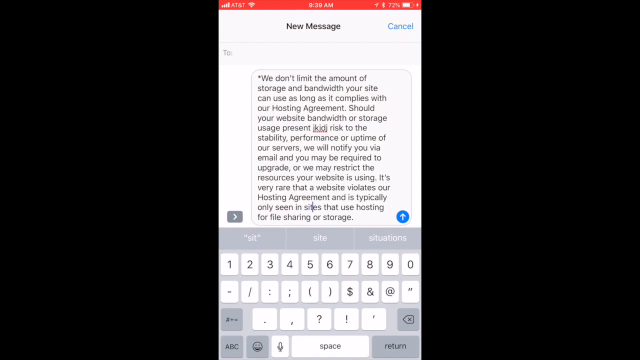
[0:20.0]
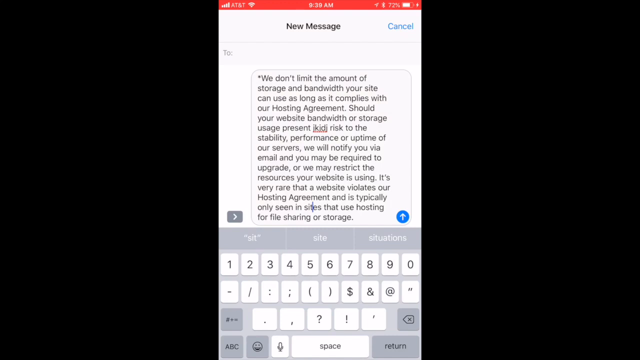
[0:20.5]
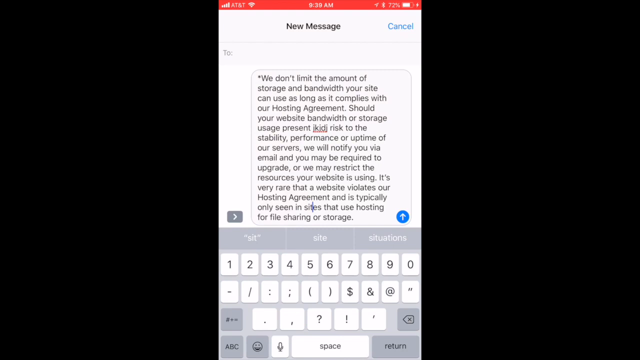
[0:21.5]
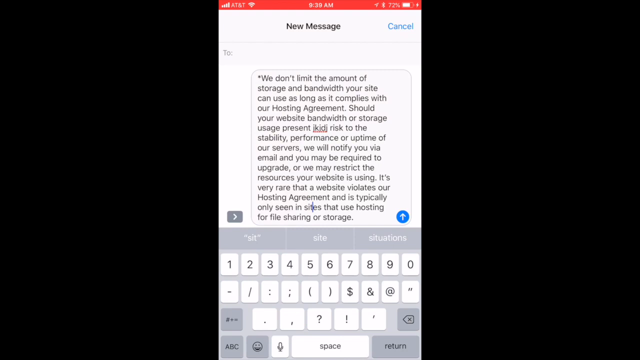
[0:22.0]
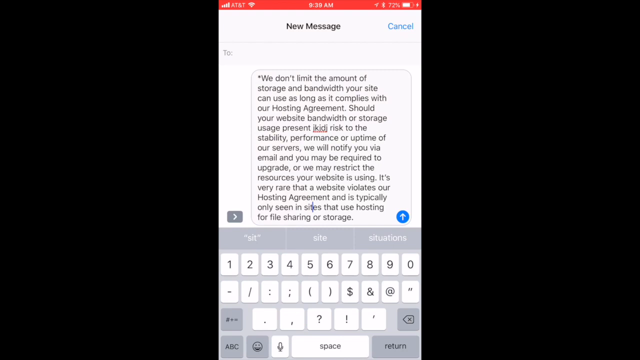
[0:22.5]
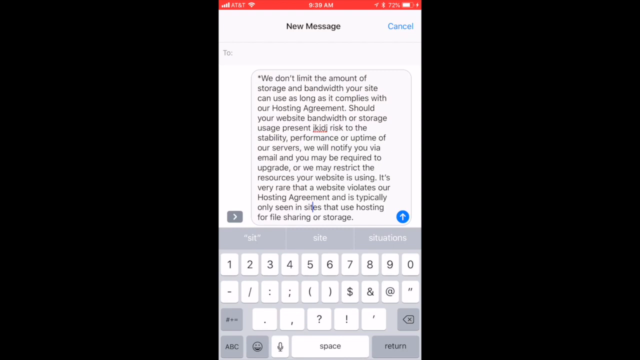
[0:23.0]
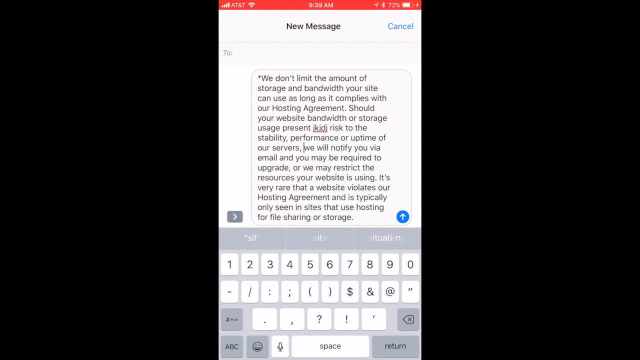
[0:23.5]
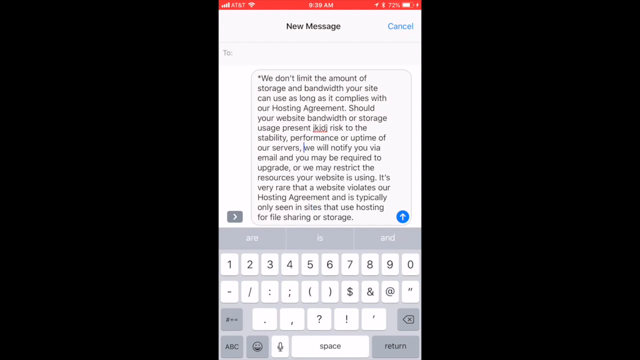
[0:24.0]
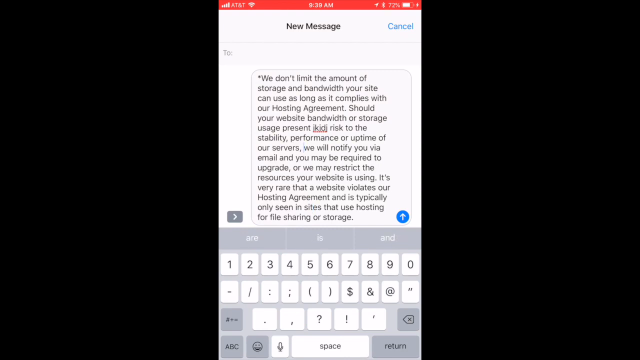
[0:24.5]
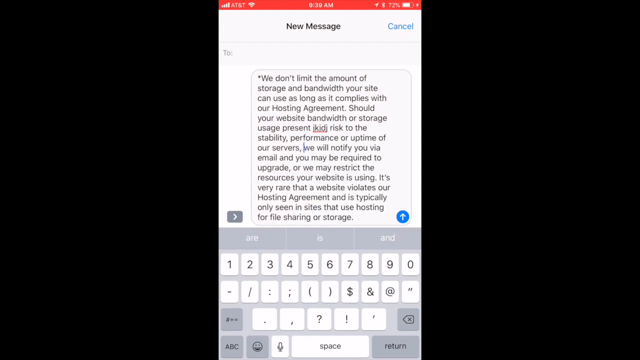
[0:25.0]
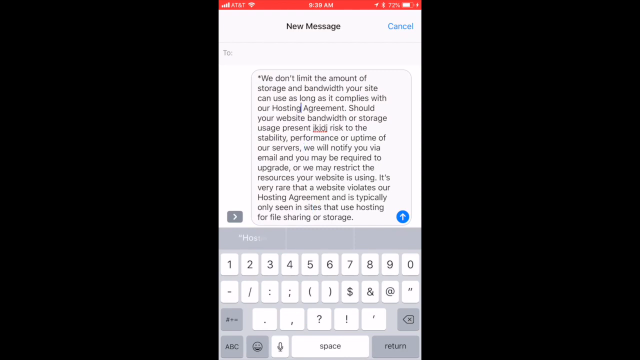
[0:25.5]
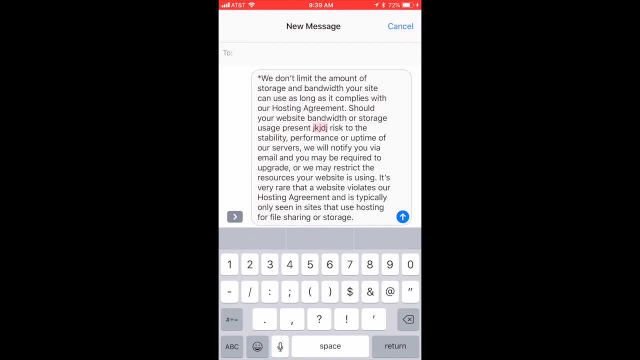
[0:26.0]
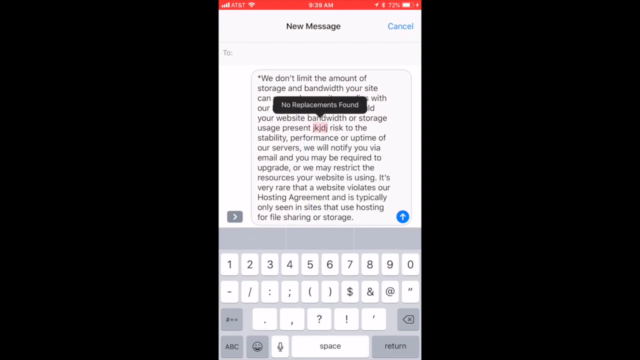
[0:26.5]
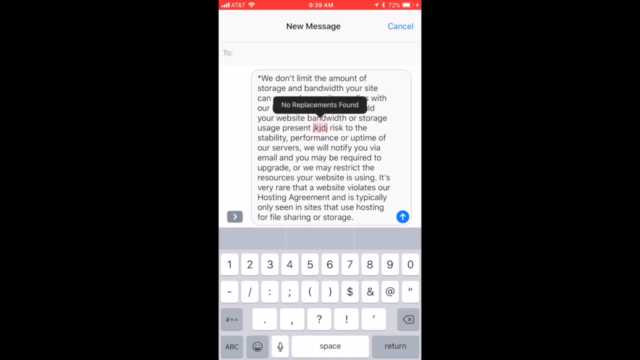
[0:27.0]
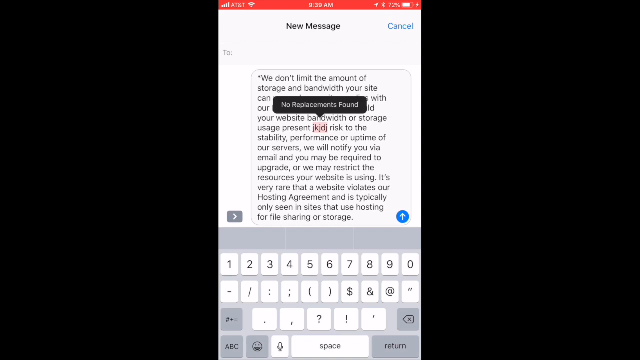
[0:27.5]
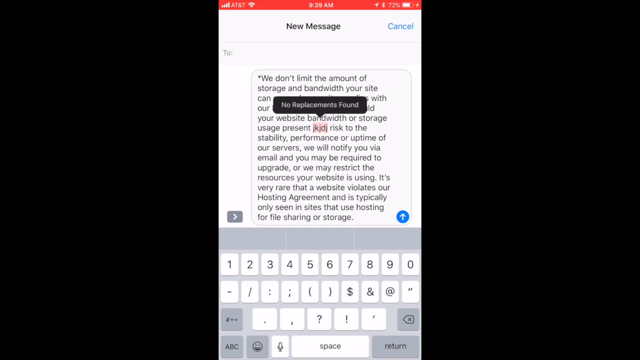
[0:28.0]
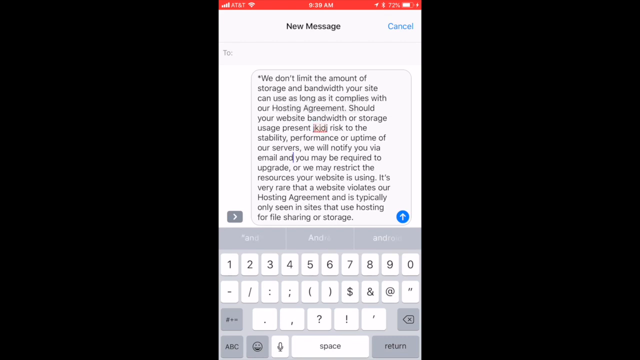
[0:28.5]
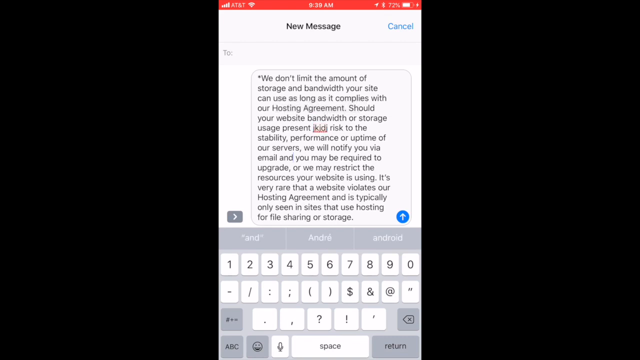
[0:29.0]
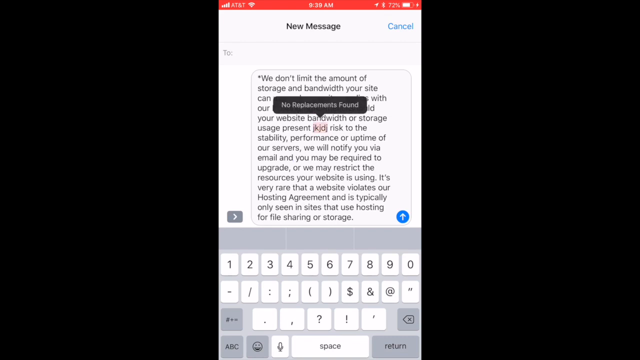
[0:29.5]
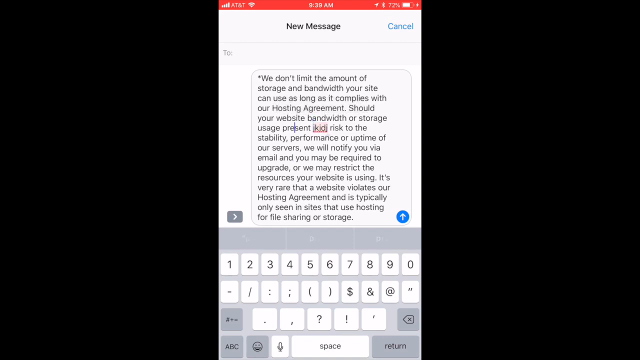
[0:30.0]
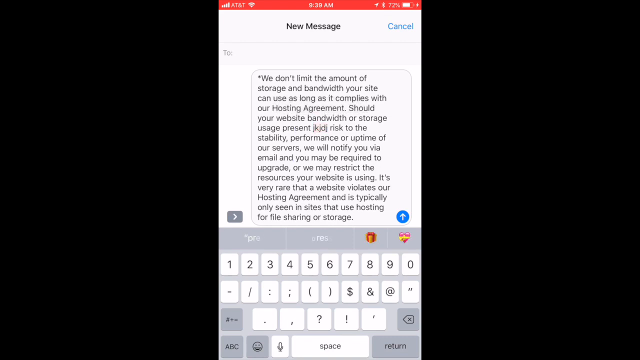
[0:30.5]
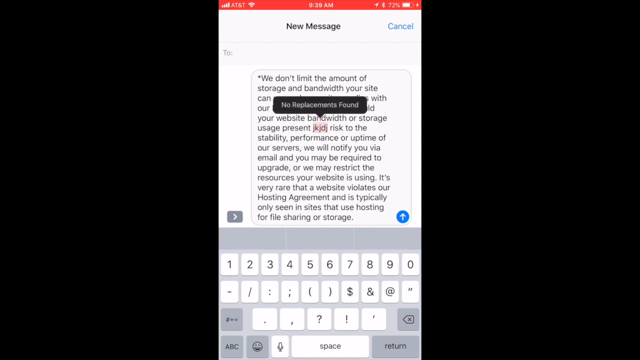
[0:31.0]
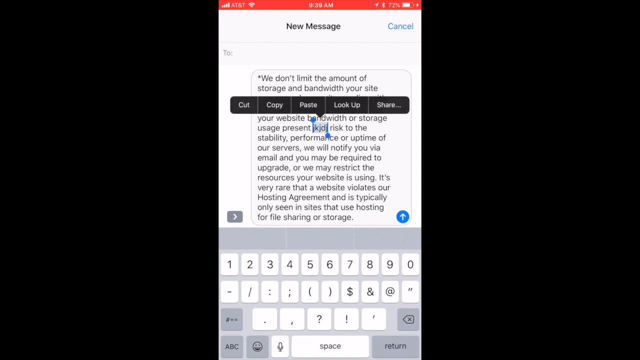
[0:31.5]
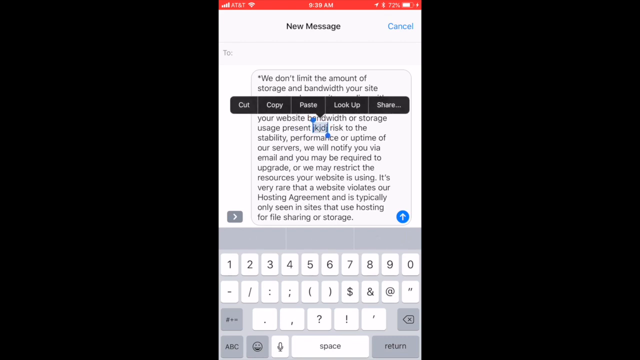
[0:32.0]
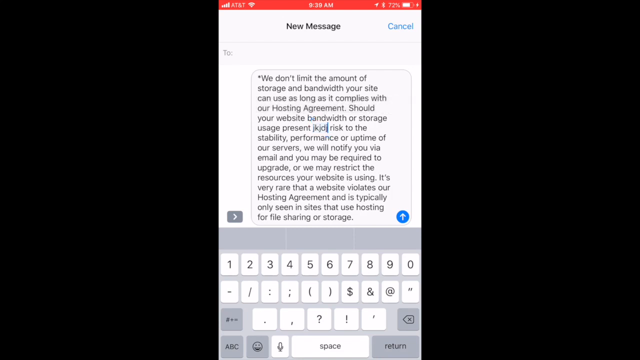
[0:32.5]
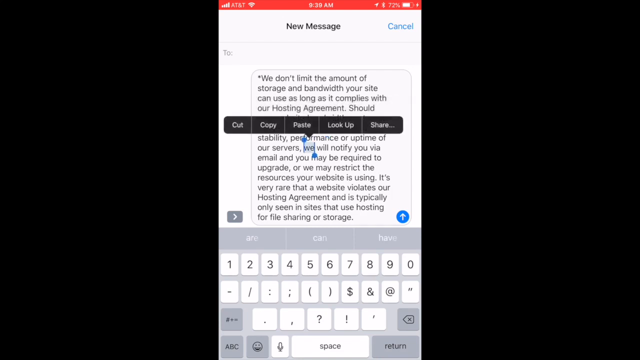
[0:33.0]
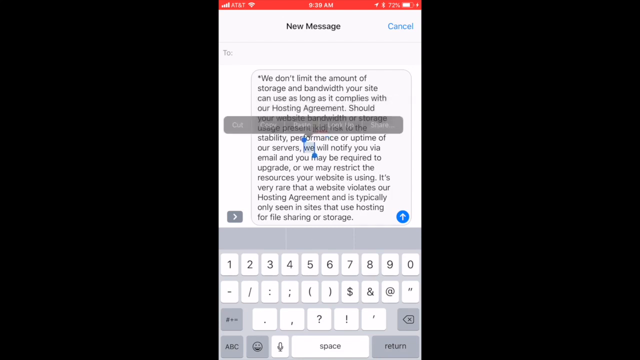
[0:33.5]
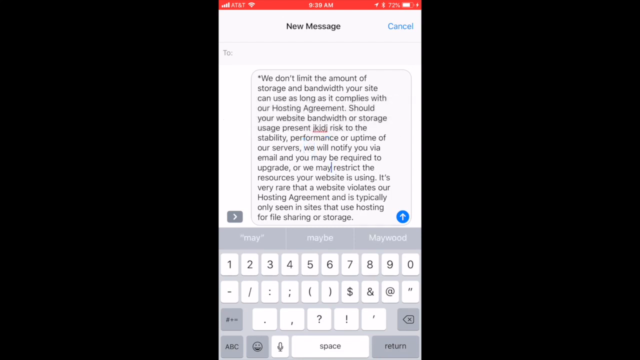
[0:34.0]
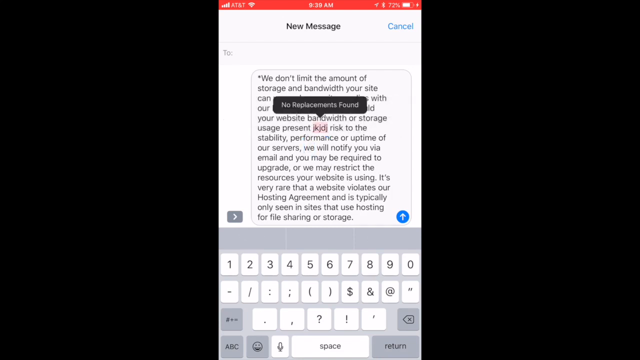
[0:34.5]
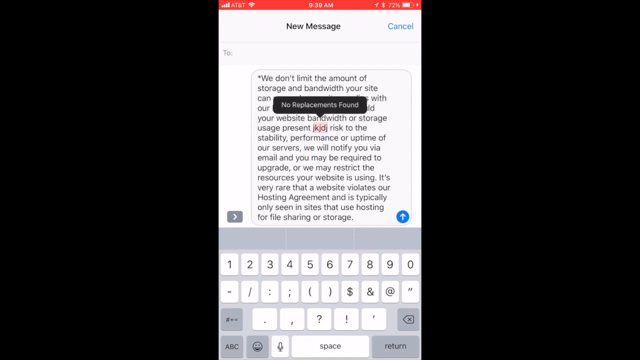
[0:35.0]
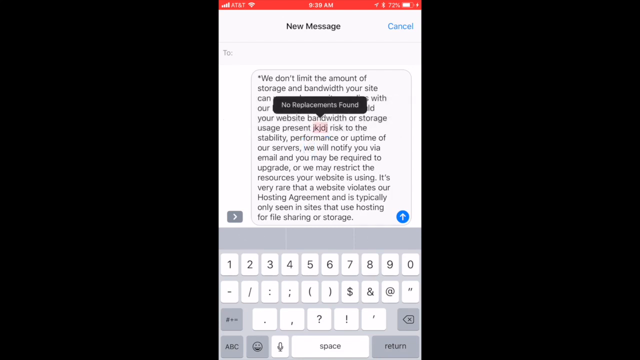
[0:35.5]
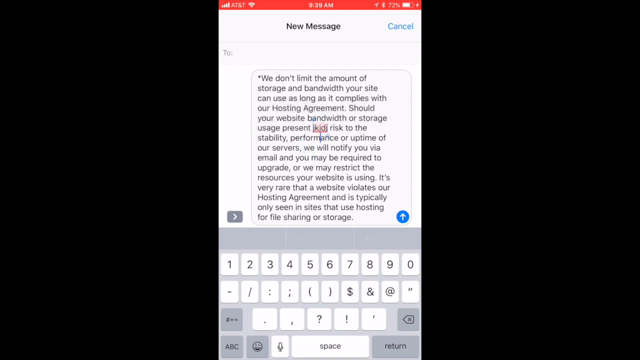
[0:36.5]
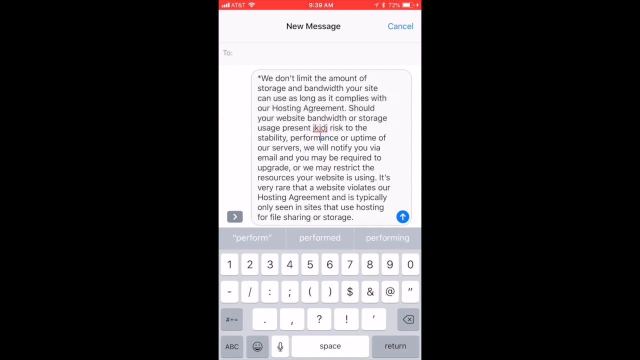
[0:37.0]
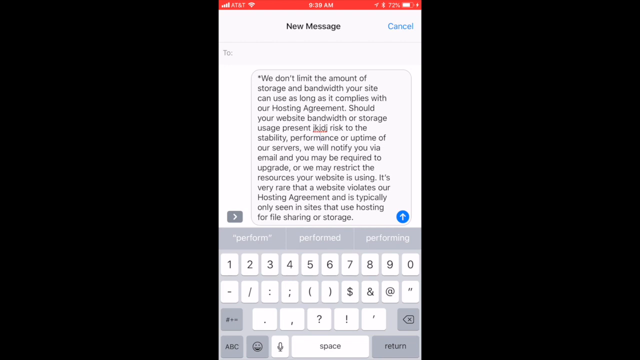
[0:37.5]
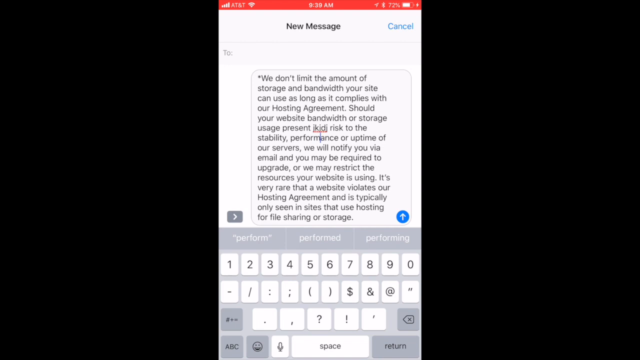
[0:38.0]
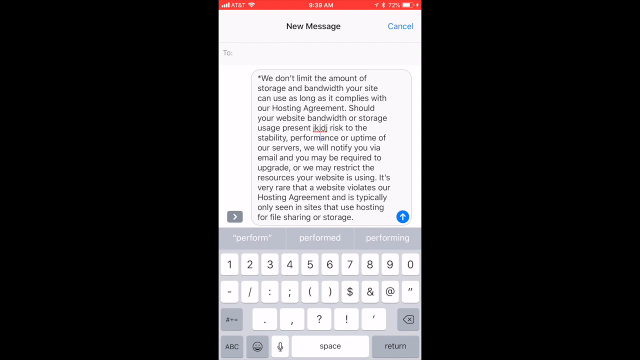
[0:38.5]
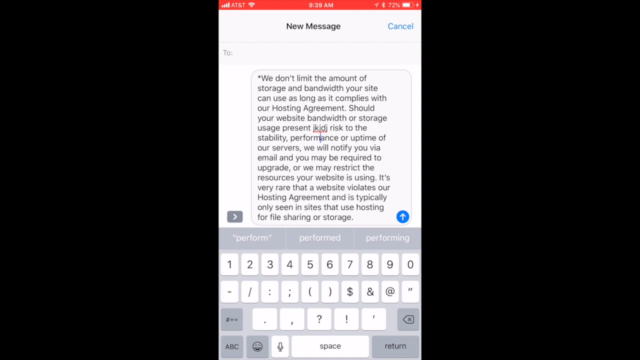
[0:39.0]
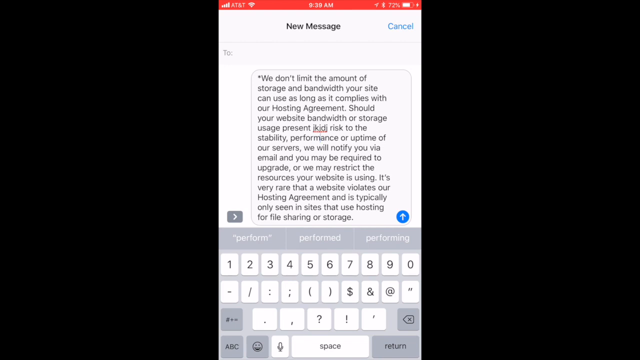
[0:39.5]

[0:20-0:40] The same message appears, with the text "We don't limit the amount of storage". At the top it reads "new message" and "cancel", and there is an arrow pointing up for sending. Something is happening inside the message: it seems to be being edited by the user, so it differs from the original. At the top there is a small red or brownish element of unclear nature. The message appears to be being copied.